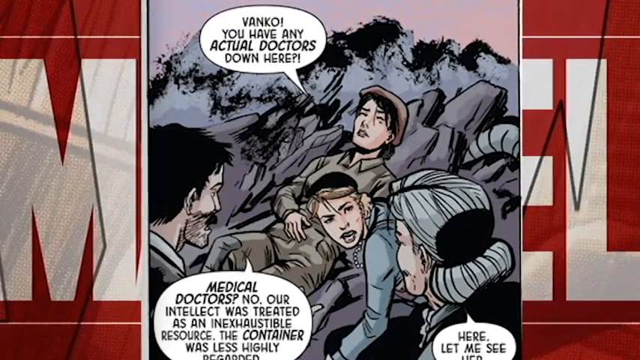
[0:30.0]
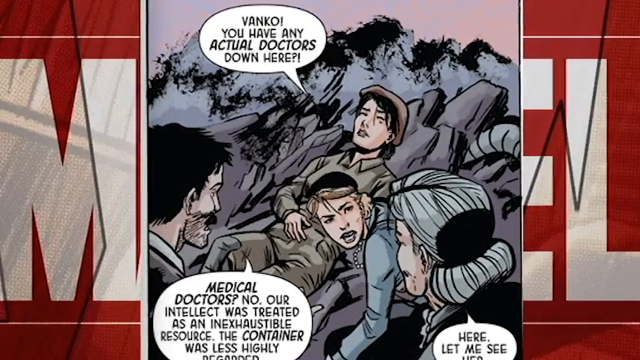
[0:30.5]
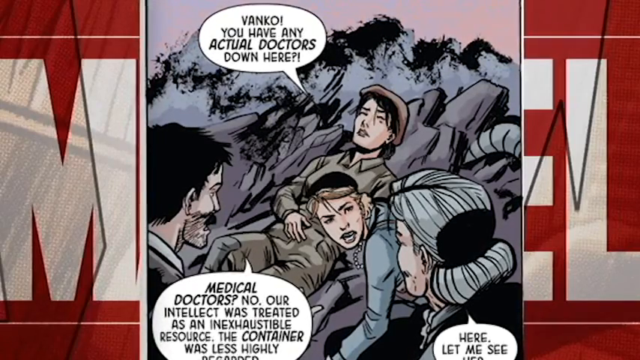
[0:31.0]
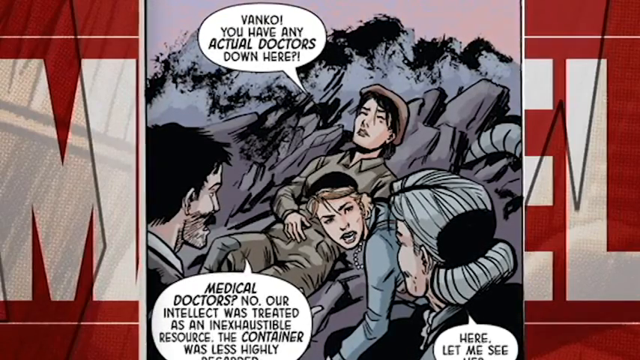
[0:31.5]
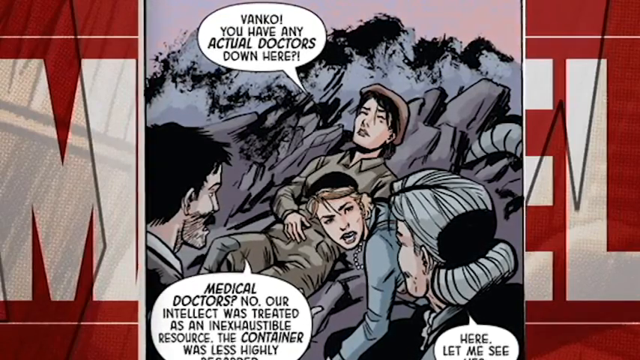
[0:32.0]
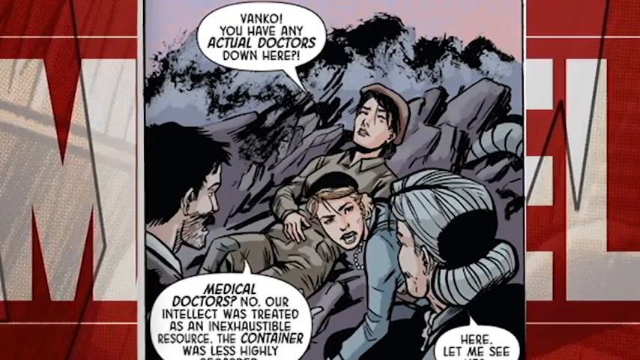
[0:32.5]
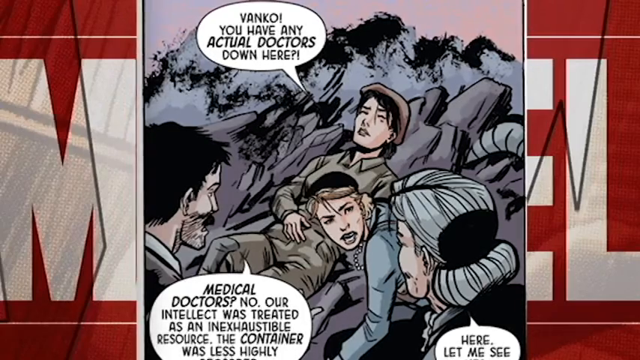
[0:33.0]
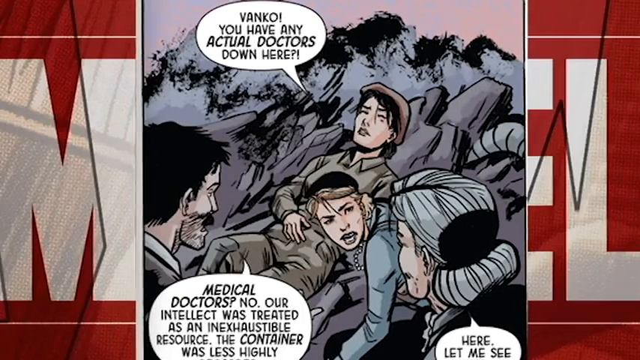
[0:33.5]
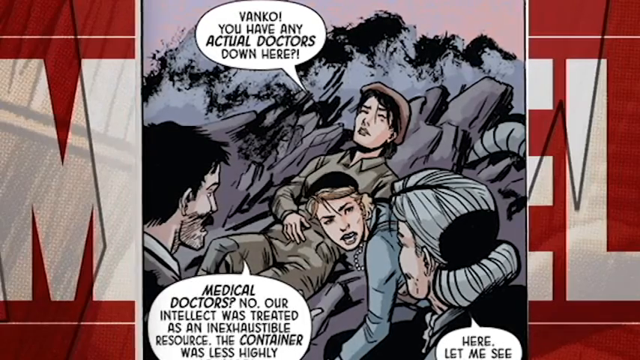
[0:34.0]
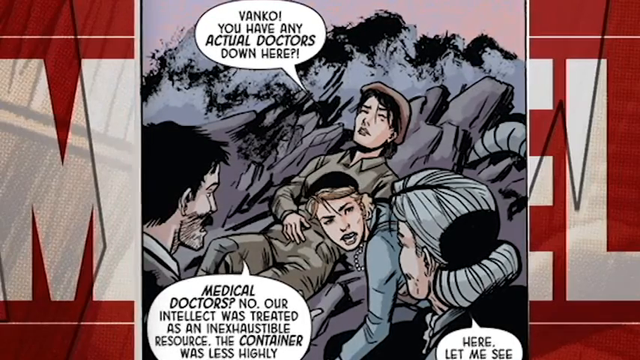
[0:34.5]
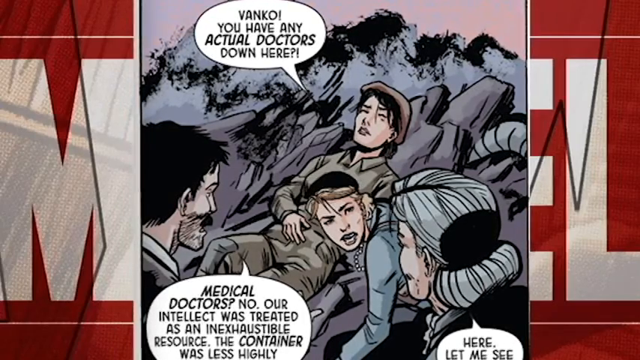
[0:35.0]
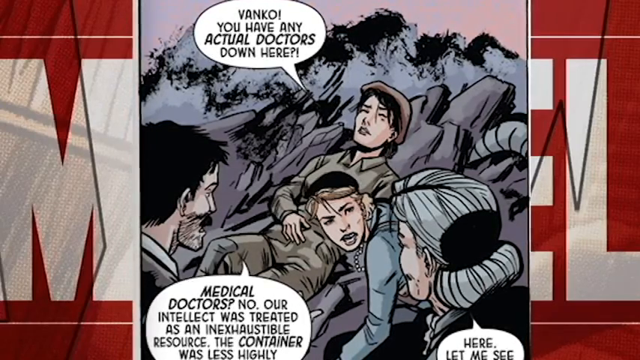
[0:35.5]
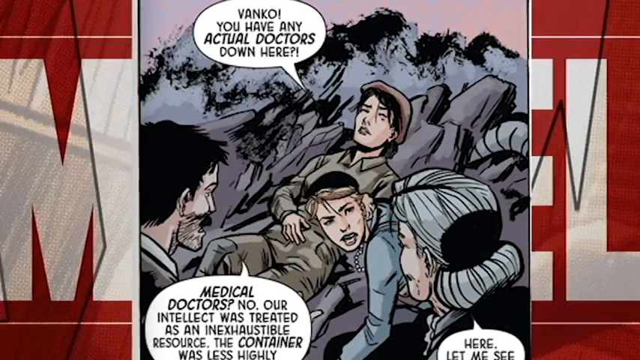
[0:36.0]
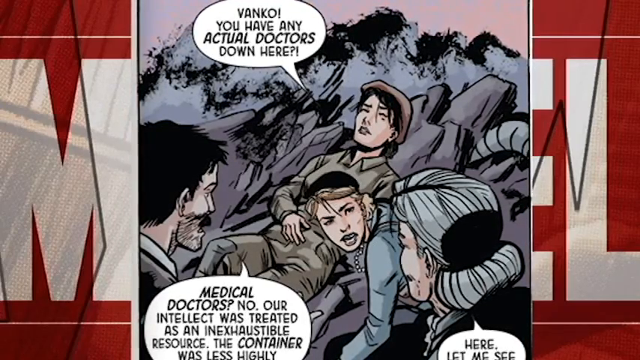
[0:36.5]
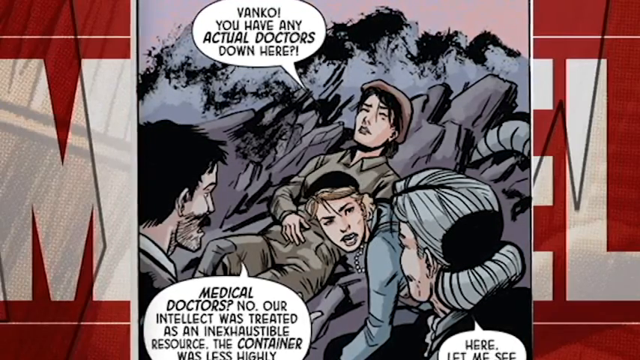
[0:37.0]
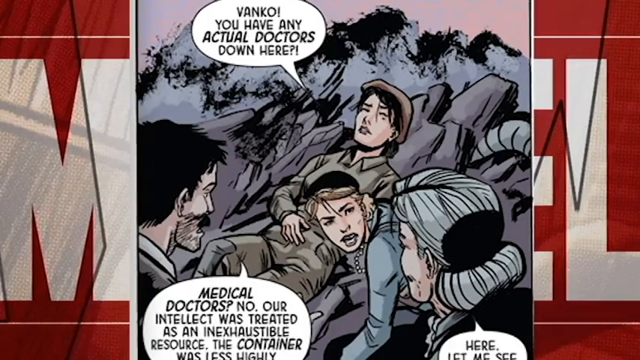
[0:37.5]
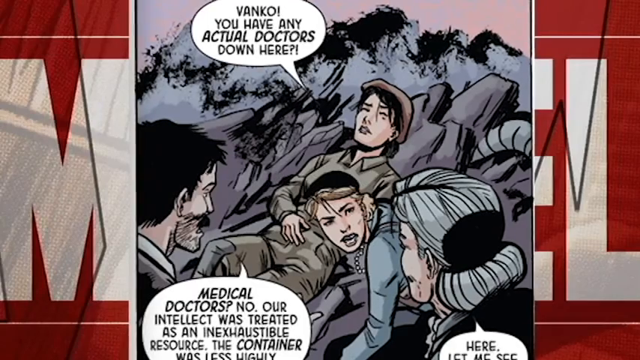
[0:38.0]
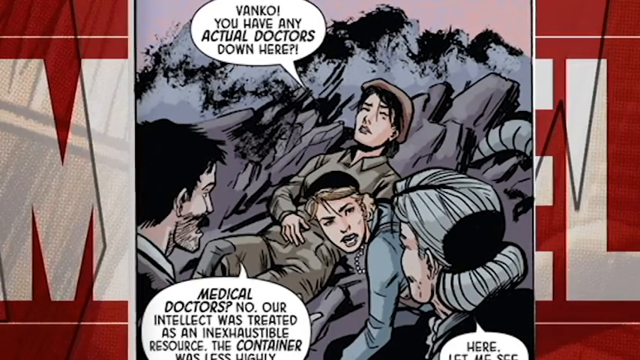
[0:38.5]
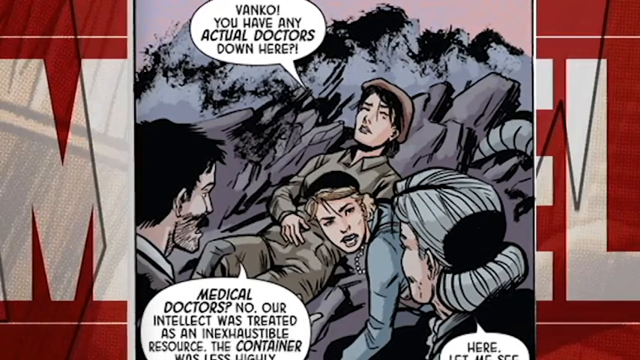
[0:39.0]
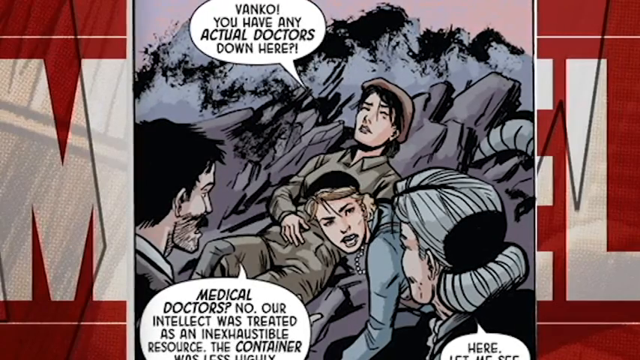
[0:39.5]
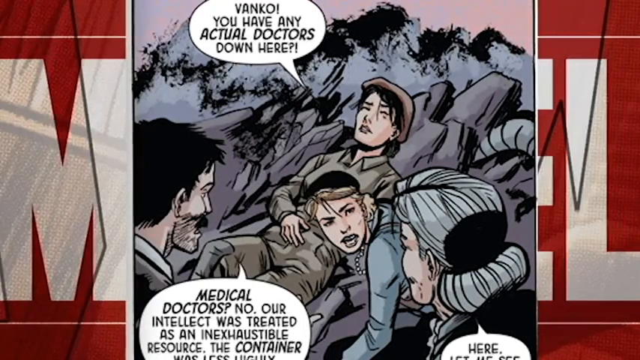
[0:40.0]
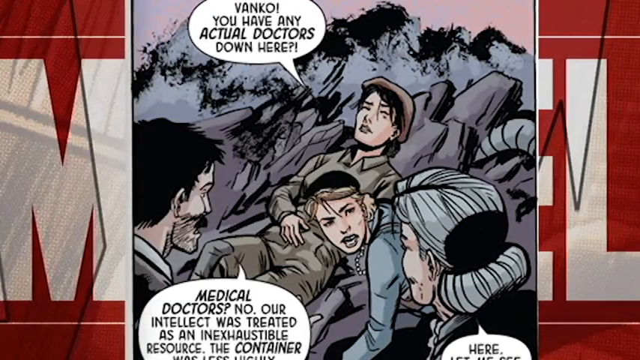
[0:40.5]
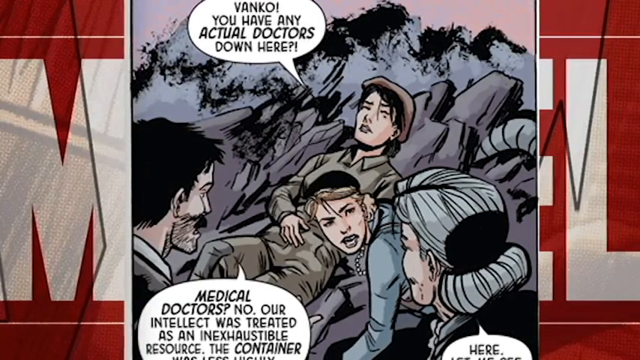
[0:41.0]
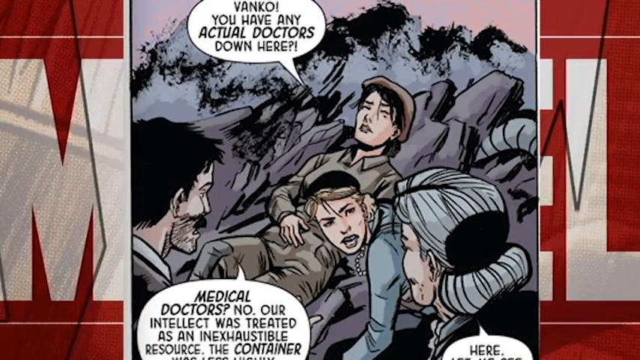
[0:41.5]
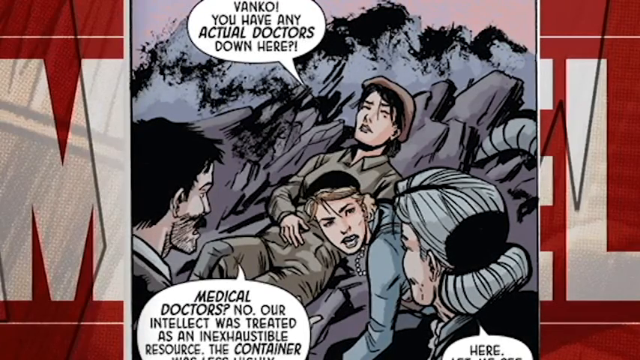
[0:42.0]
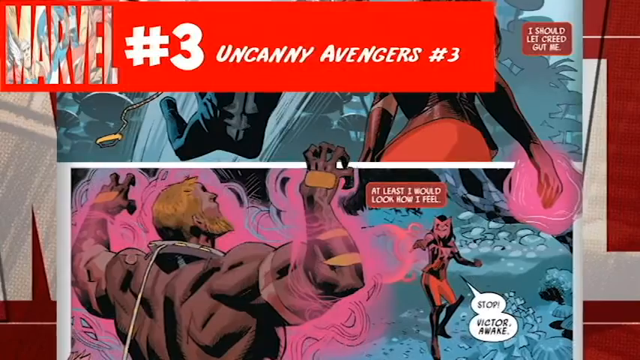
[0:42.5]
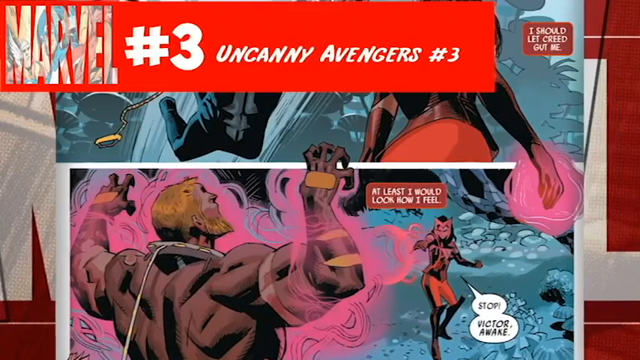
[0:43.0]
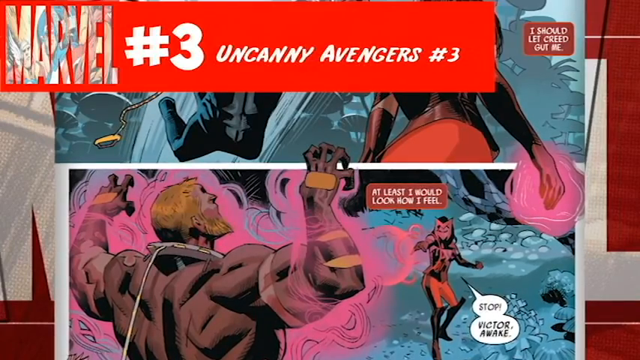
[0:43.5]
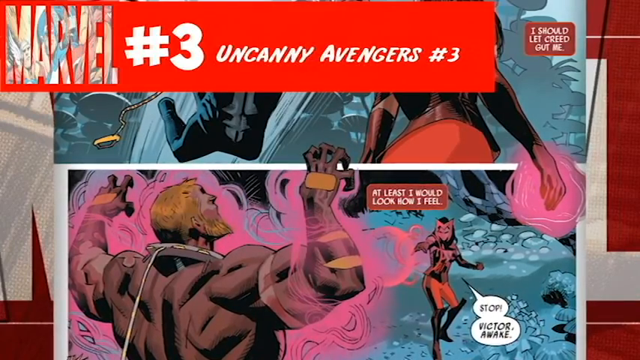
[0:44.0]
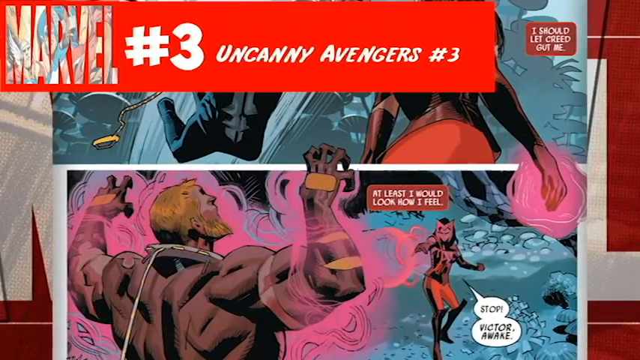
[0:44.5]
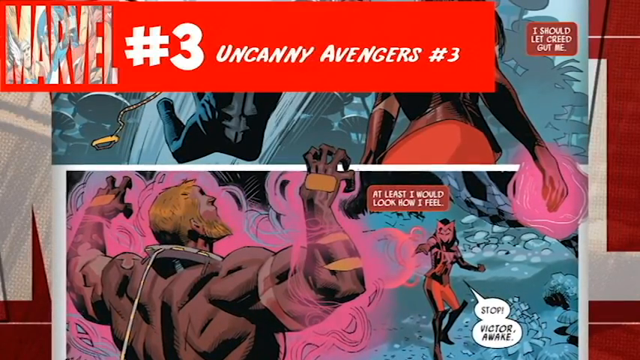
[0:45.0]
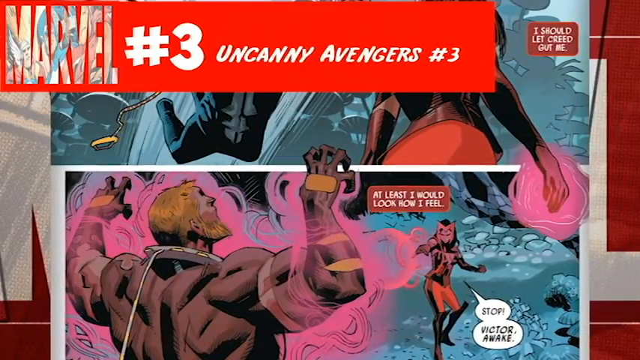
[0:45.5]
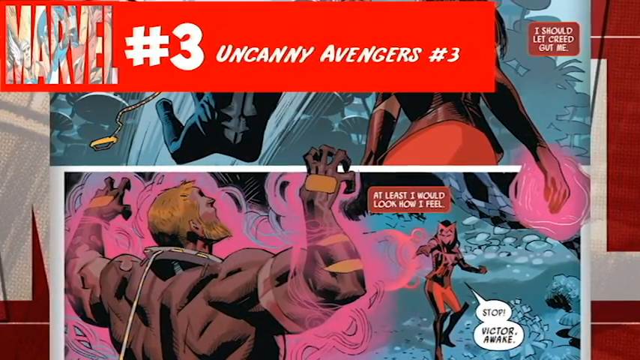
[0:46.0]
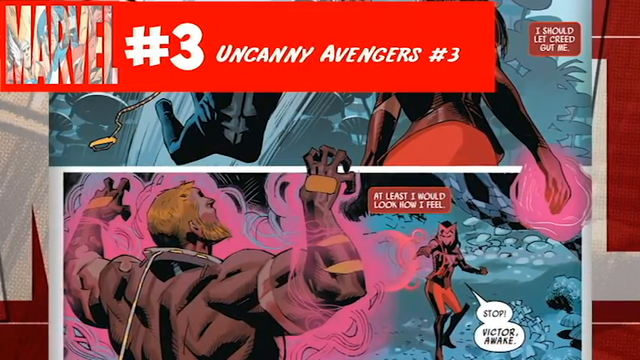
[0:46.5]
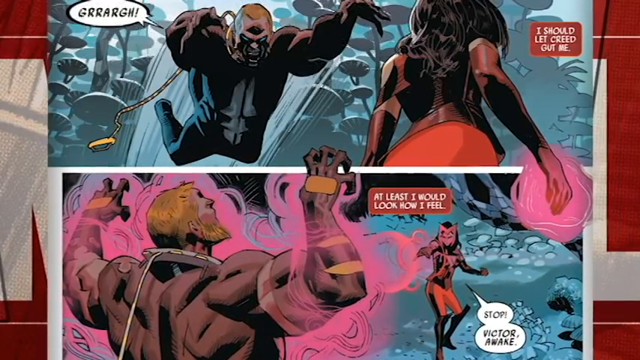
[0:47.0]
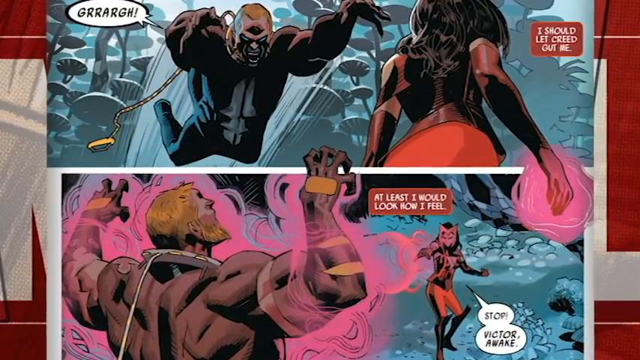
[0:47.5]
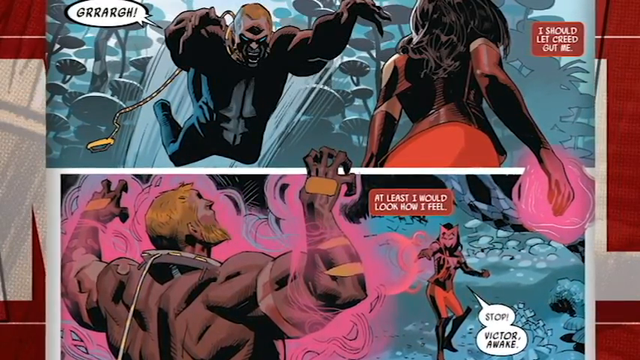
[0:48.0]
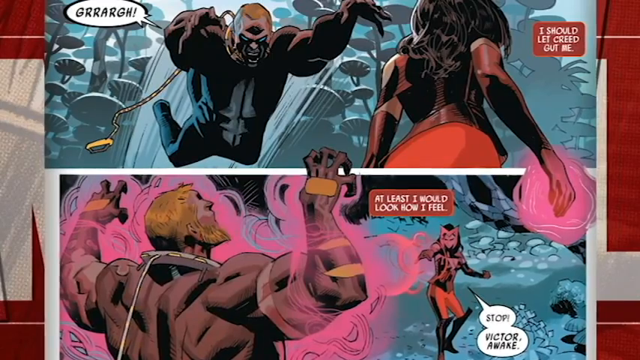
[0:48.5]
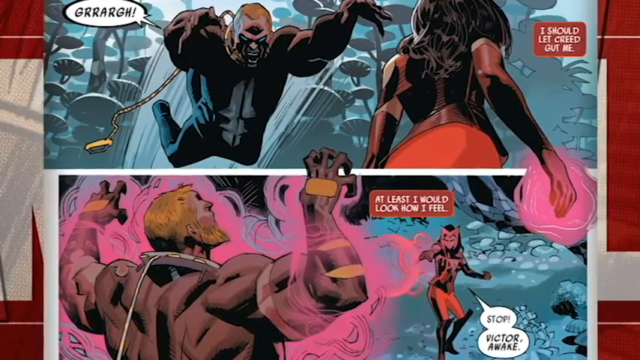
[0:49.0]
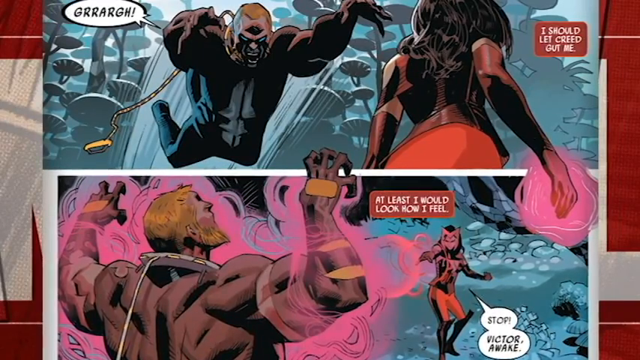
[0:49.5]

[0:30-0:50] This panel, number four, depicts three women and a man. One of the women seems to be a soldier and seems to be injured, as she is asking for an actual doctor. Another woman wears a pearl necklace and a pale blue shirt, and an older woman has gray hair; the woman in the pale blue shirt is leaning away from the injured woman and talking to the woman with gray hair. In the left outer corner is a man with short black hair and a short, scruffy beard who tells them they do not have a doctor. The scene is somewhere in the wilderness: the injured woman seems to be leaning against a rock, and mountains are visible in the background. The picture has a bluish-violet hue; it is very cold-toned, in a simple comic style with shadows. As with number five, the video just zooms in.